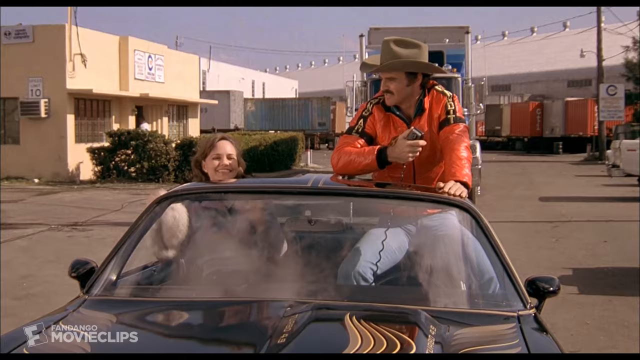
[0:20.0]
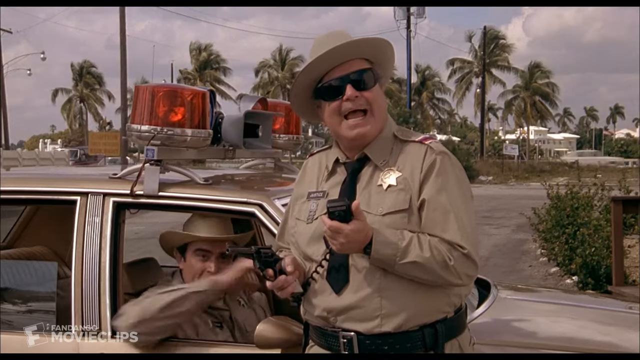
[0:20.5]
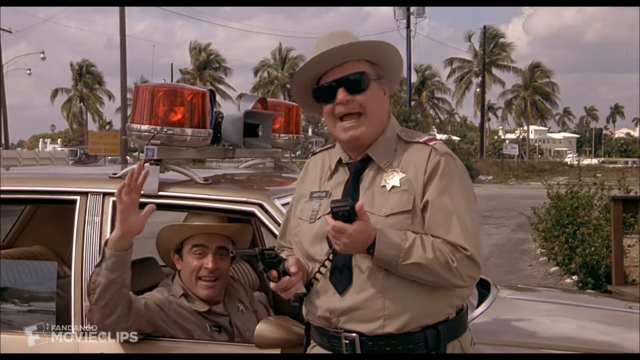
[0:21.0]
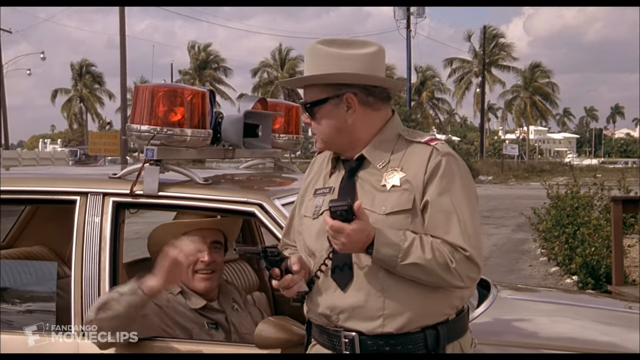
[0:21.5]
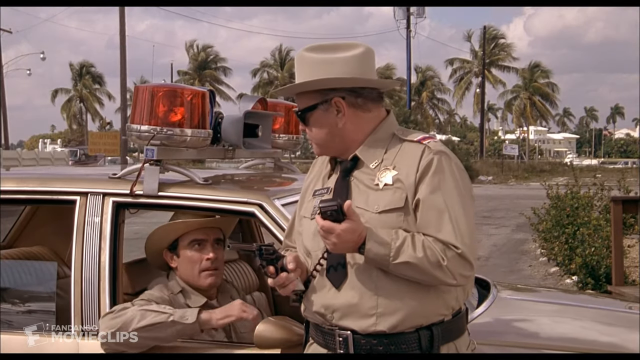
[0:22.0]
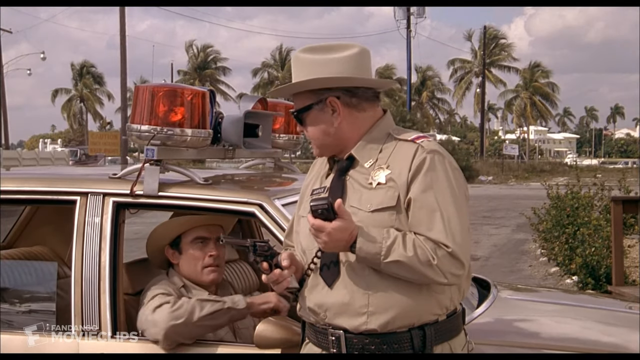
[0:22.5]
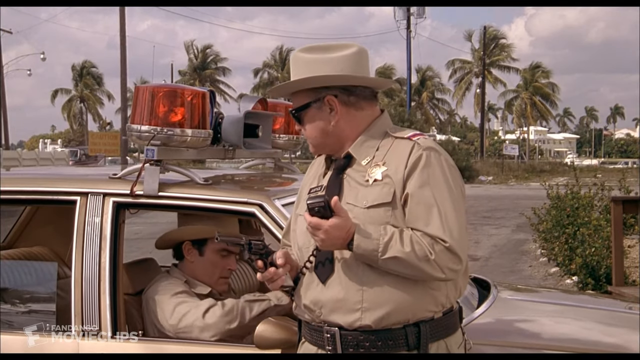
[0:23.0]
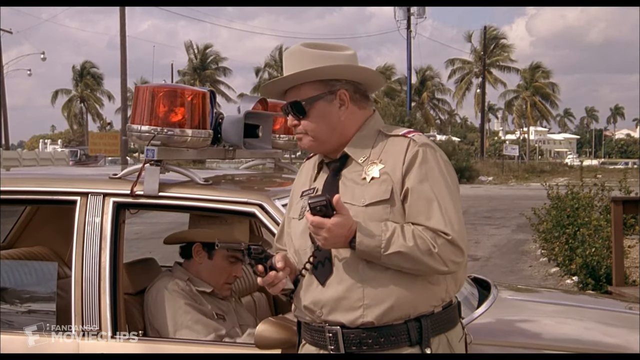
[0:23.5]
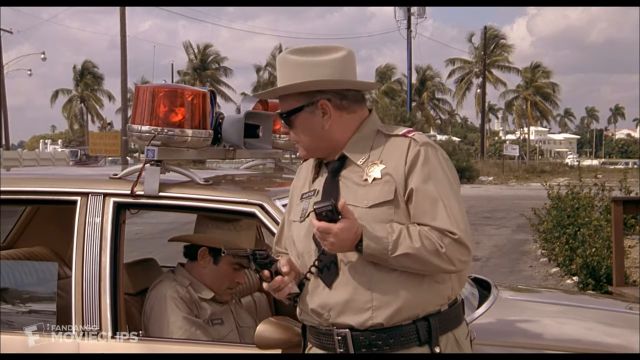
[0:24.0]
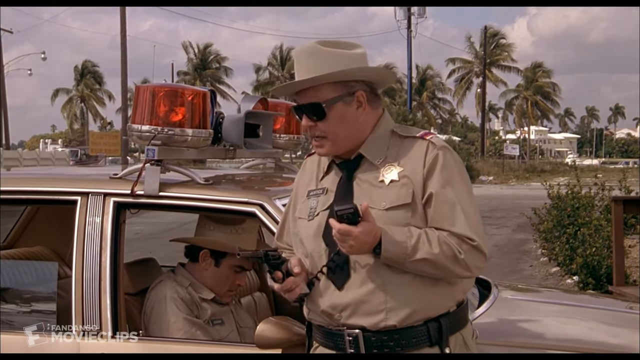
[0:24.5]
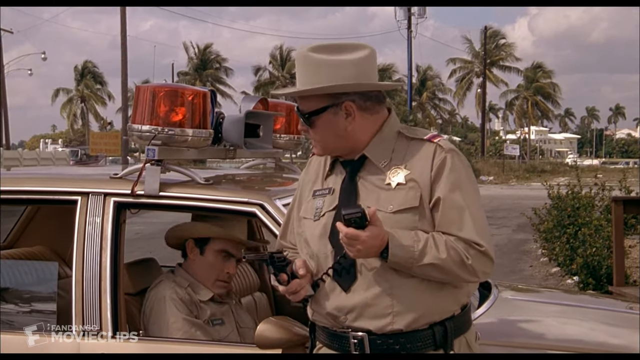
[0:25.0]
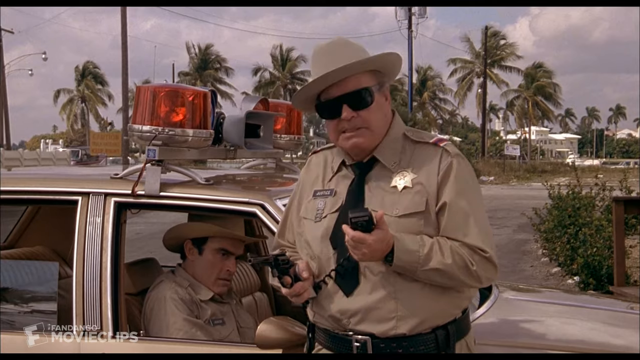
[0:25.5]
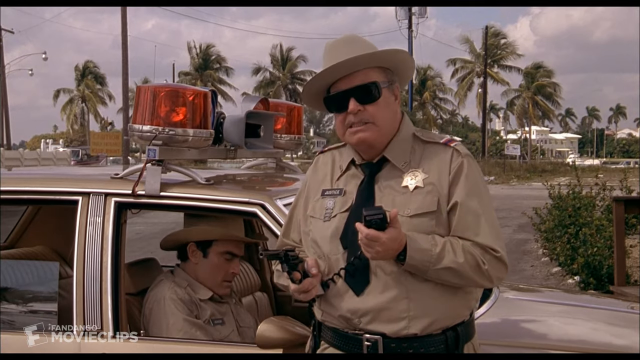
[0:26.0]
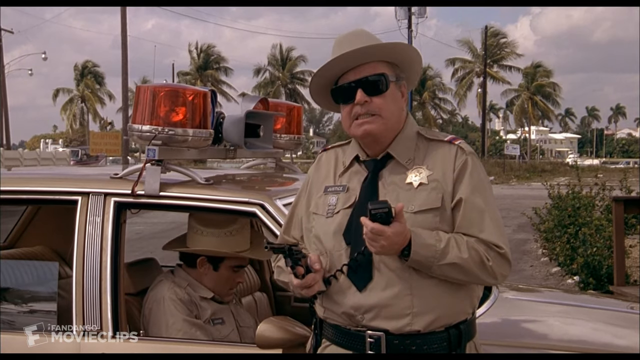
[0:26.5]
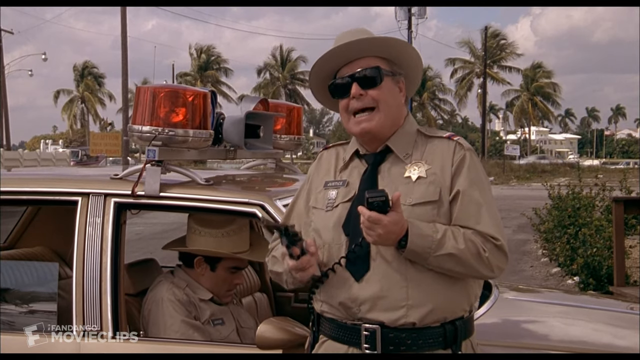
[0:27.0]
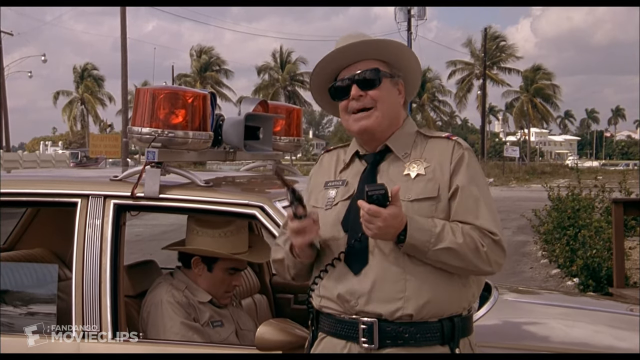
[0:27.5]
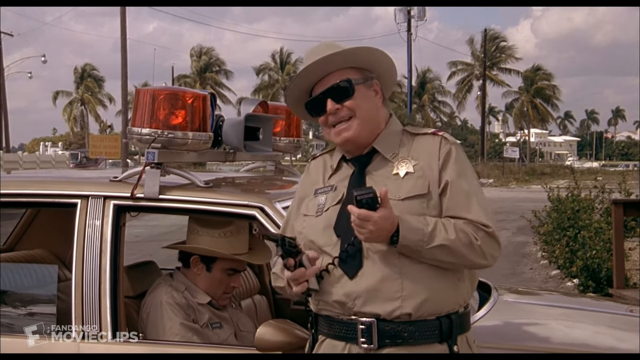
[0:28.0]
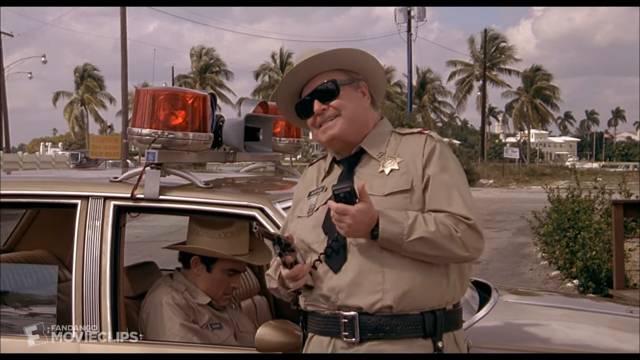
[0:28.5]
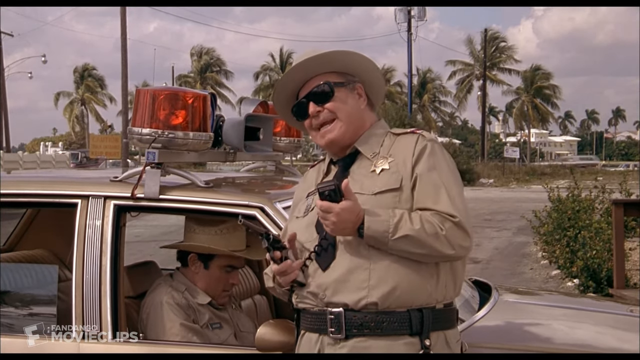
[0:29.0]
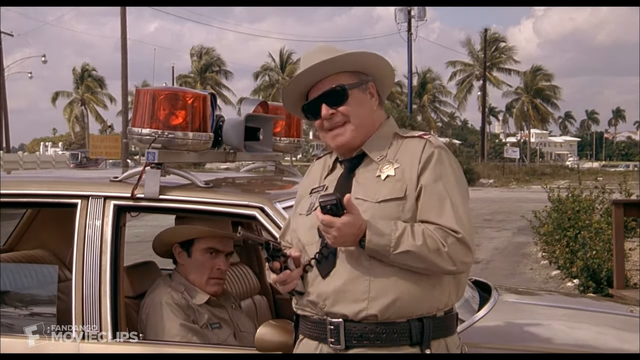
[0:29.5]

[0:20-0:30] The other policeman, who appears to be sitting inside the police car and also wears a hat, raises his hands out of the car and signs back to the woman. The policeman holding the gun says something rudely to him, and he gets scared and turns his head back inside the car. The policeman outside the car seems to be cursing the one inside, and he speaks in a strange way and shouts at the couple in the car on the other side of the street. The man with the radio, sitting in the car in his hat and orange blouse, seems not to like what the policeman said.